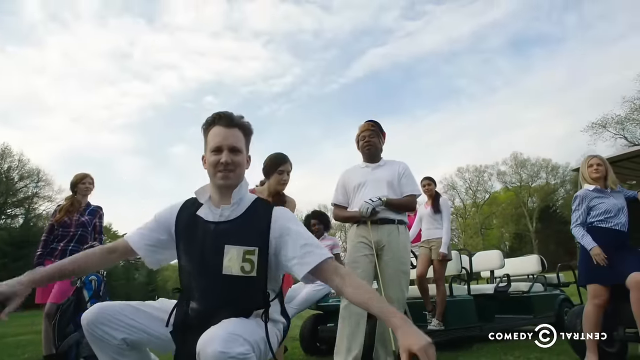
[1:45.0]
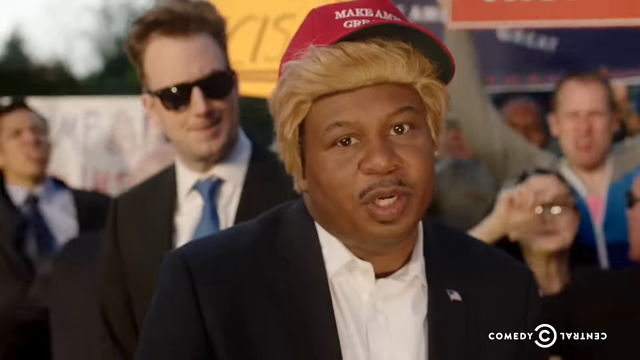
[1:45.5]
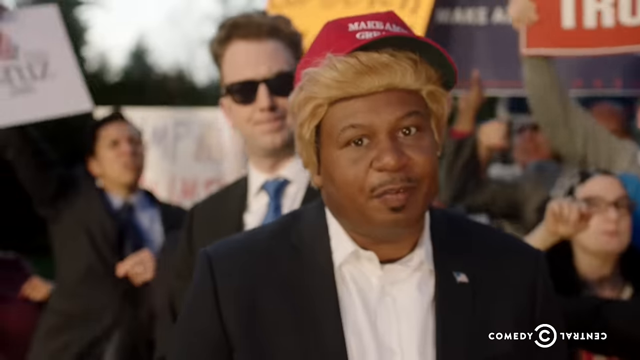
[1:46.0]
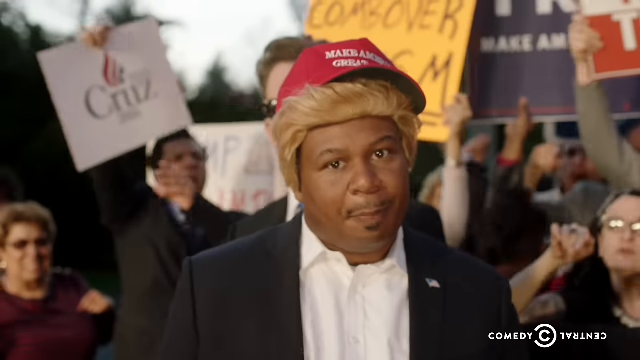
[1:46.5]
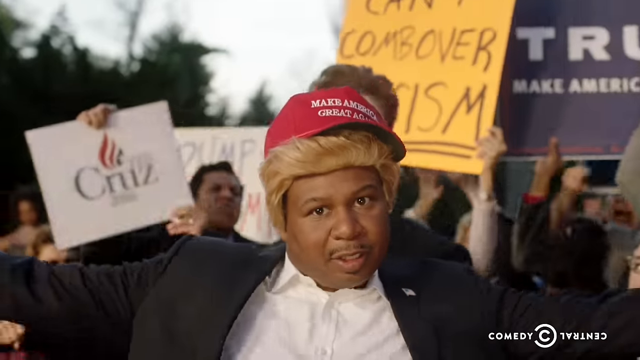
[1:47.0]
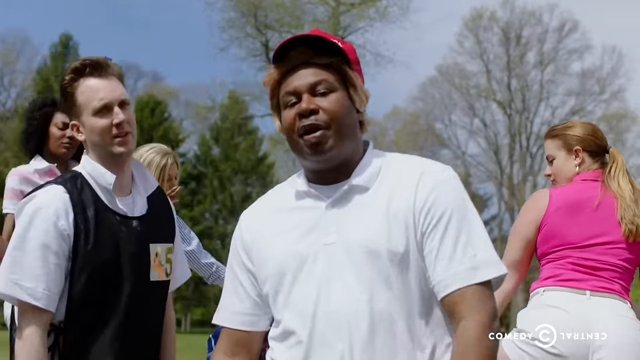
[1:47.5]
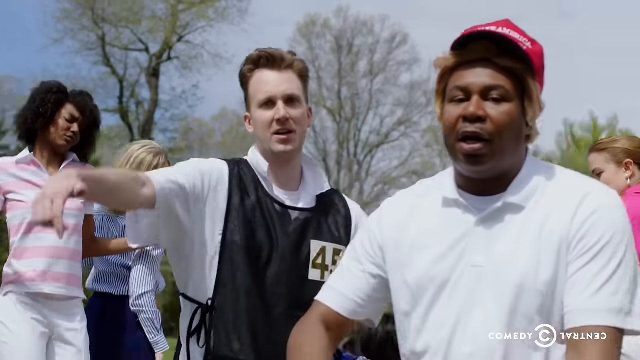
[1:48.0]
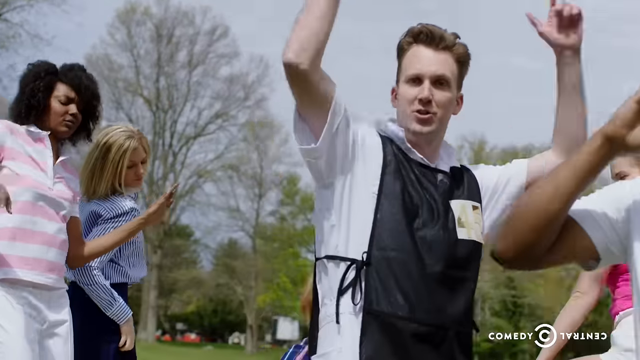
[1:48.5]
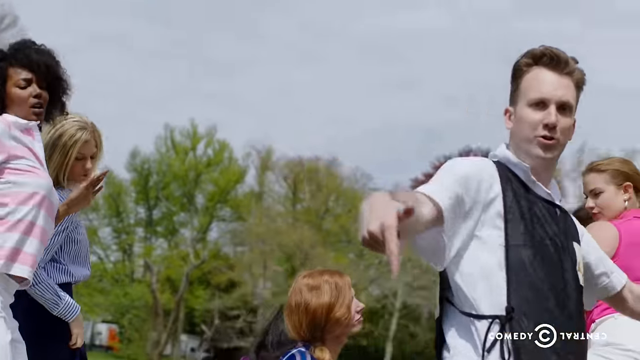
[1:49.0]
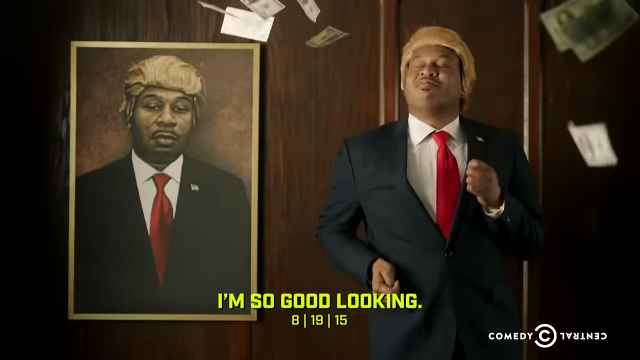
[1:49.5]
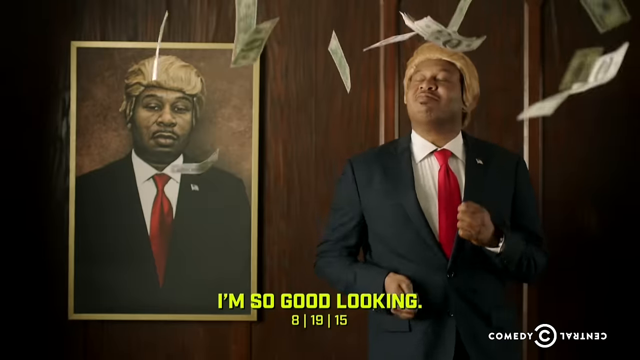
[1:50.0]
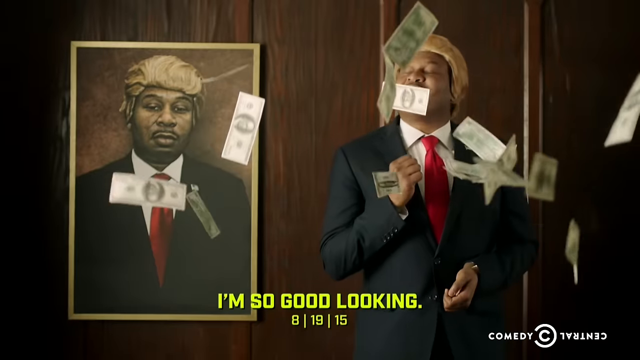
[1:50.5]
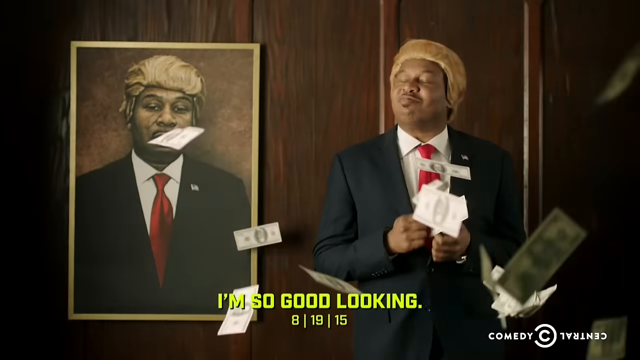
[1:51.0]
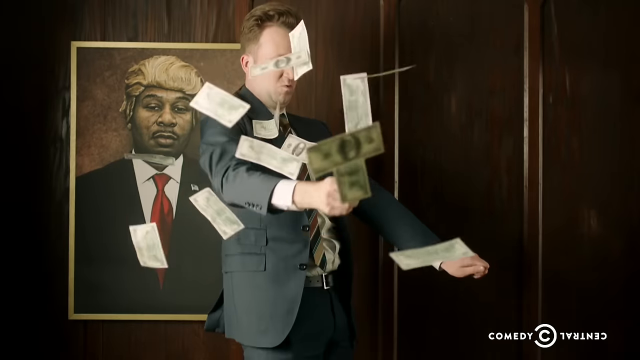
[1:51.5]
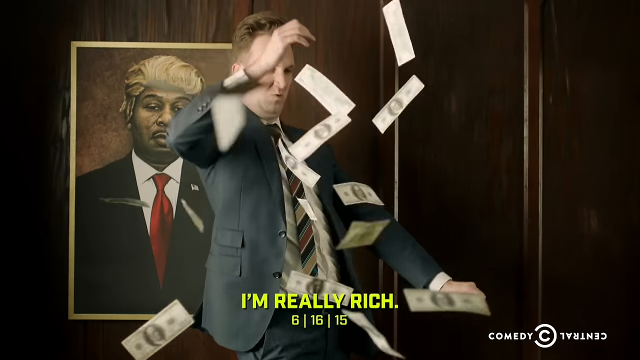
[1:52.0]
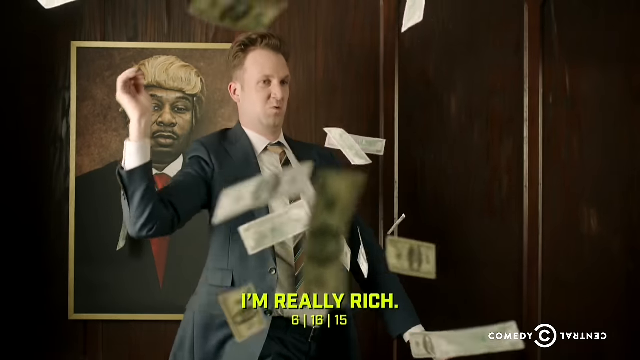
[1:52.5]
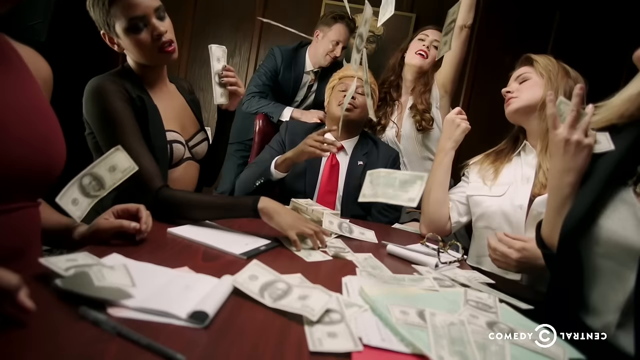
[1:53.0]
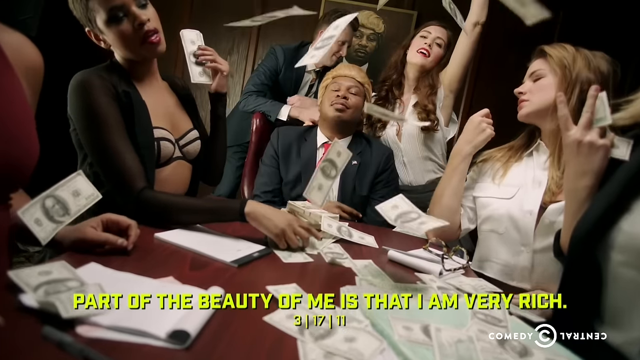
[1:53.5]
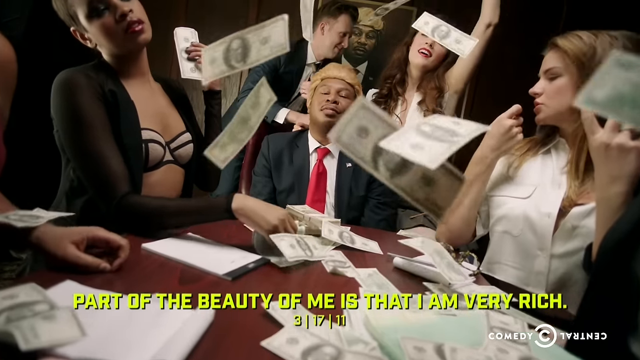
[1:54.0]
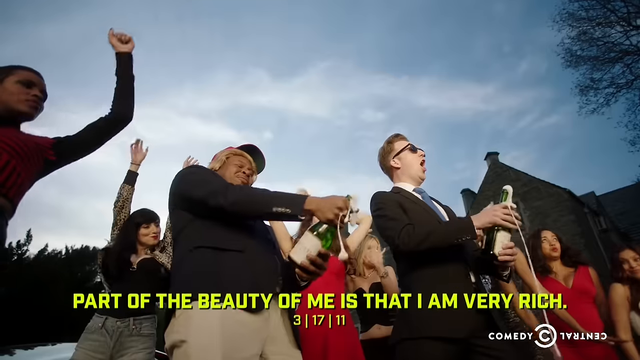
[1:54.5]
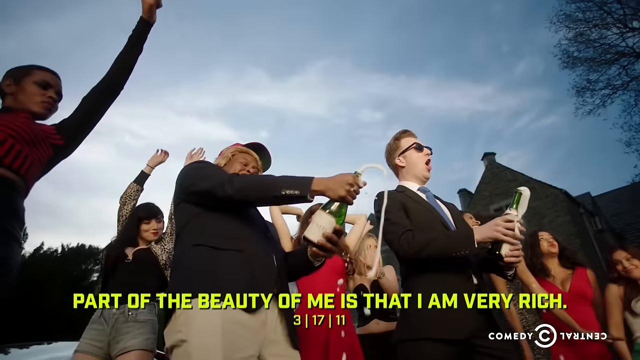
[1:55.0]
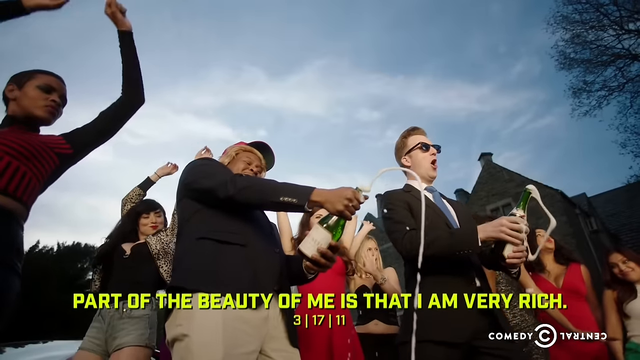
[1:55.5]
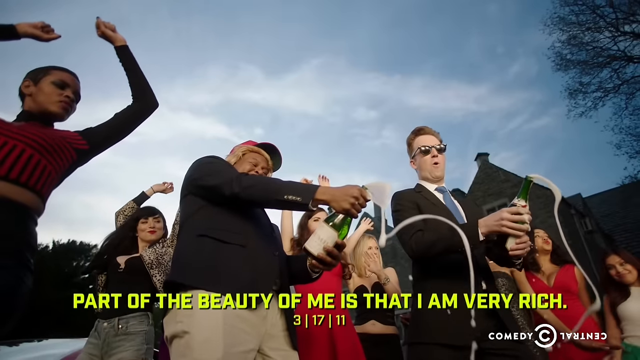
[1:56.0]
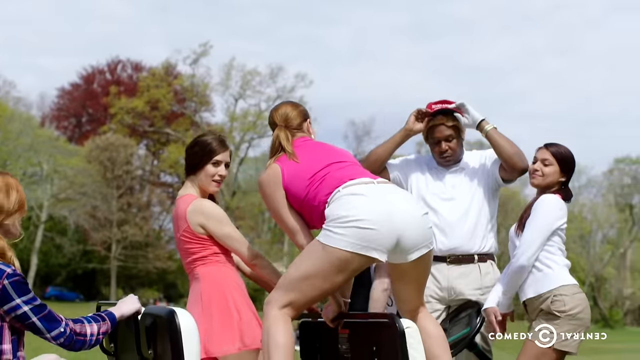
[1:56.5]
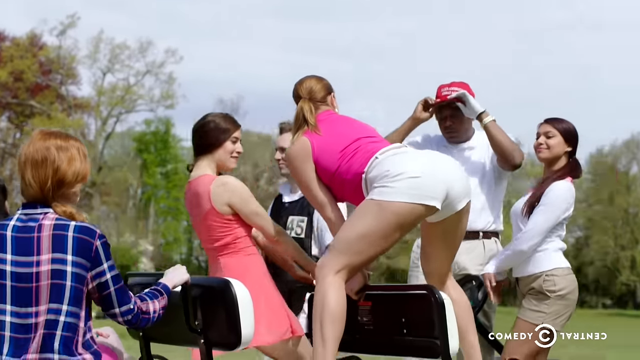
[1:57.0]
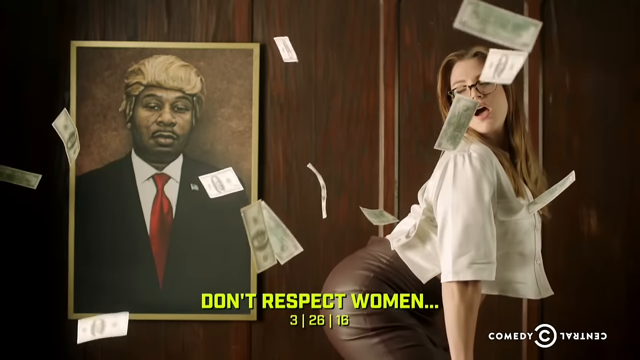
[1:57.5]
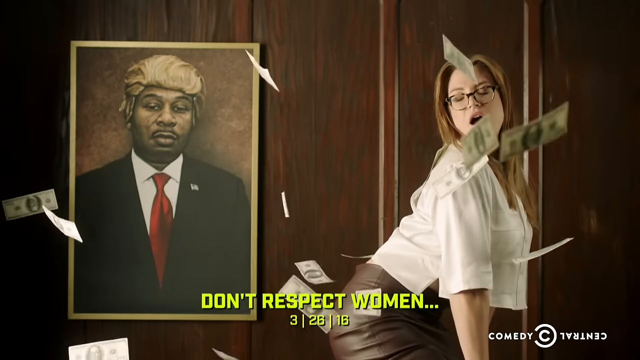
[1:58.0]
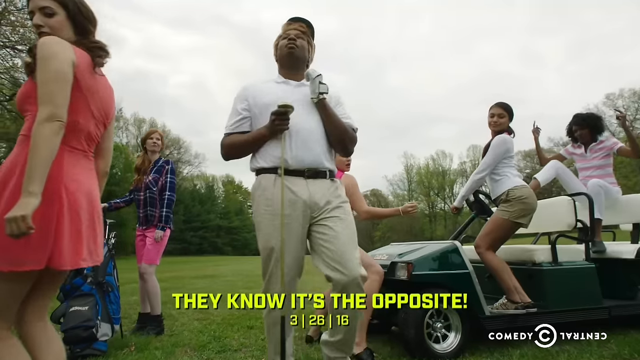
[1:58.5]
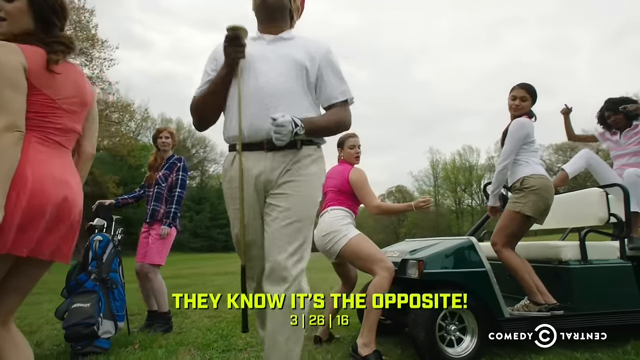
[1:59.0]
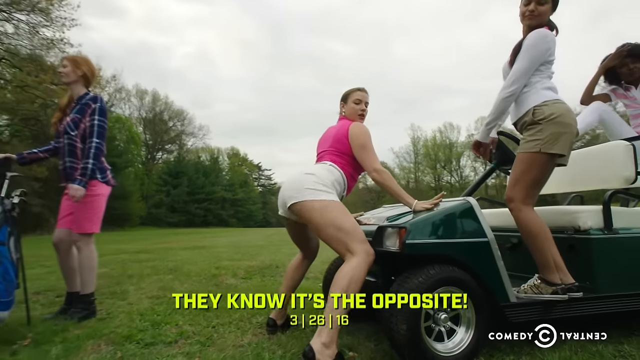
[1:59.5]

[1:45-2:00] At the golf club setting, women dance around Donald Trump and the white male caddy. The caddy appears to be wearing a black net mesh apron with the number 4 on its top right. Donald Trump appears to be dancing, wearing a white polo shirt with a white undershirt. Several of the women appear to be dancing on one another, close to but not right next to Donald Trump. Donald Trump is then next to a portrait of himself, apparently dancing in place as he waves his arms up and down. Several dollar bills, apparently showing Ben Franklin, float and fly everywhere across the scene. The video pans back to several women who appear to be dancing next to him as he sits at the table, while more money flies and is thrown. It then cuts back to the brick mansion, where Donald Trump shakes what appears to be champagne, which bubbles and sprays foam.